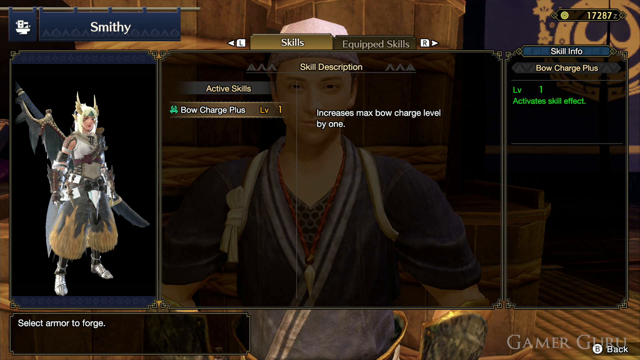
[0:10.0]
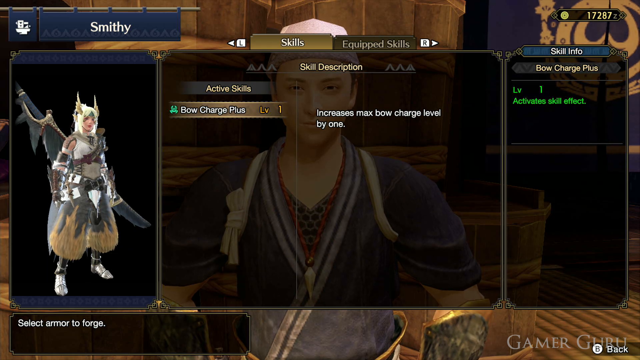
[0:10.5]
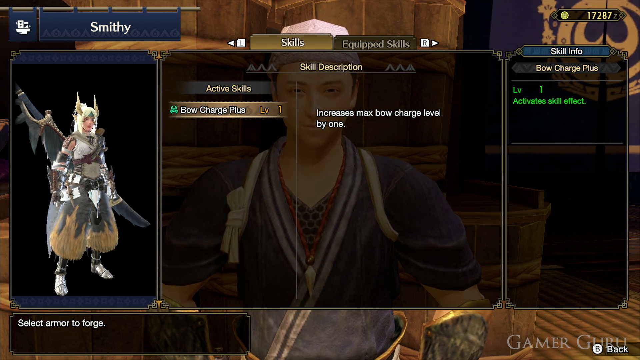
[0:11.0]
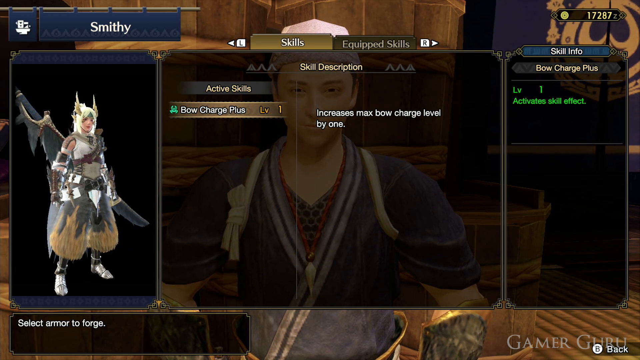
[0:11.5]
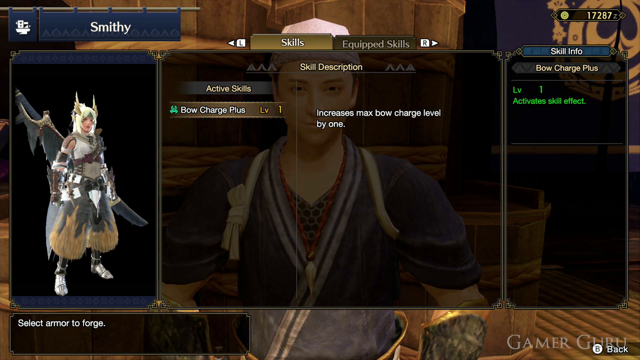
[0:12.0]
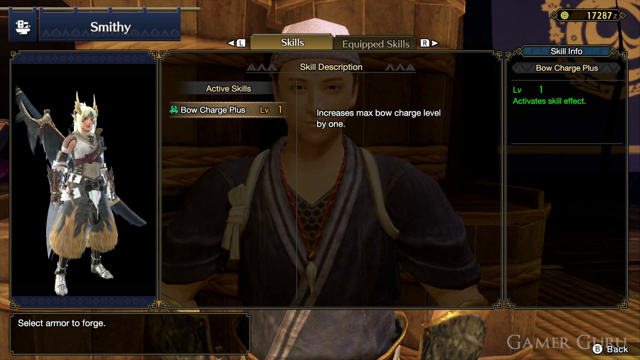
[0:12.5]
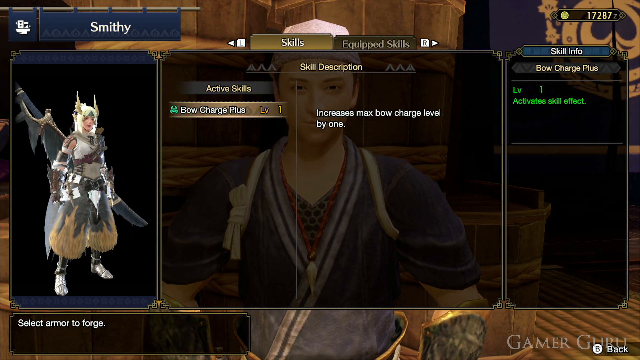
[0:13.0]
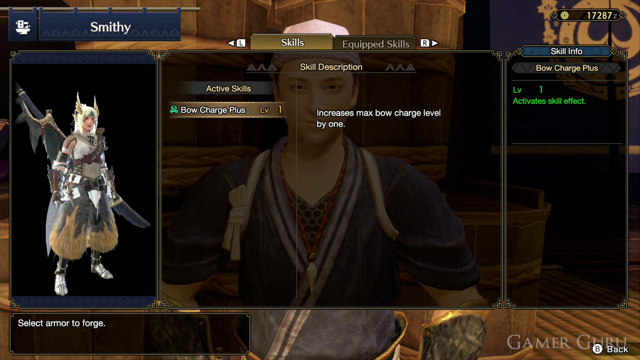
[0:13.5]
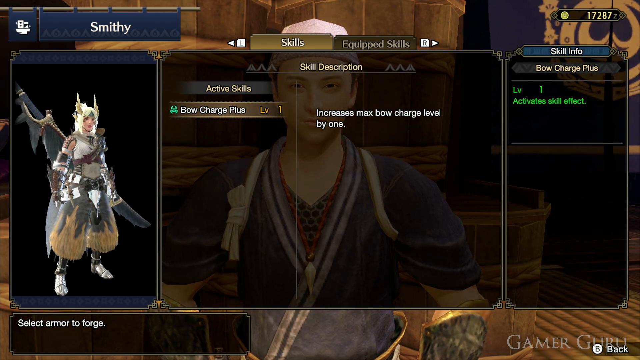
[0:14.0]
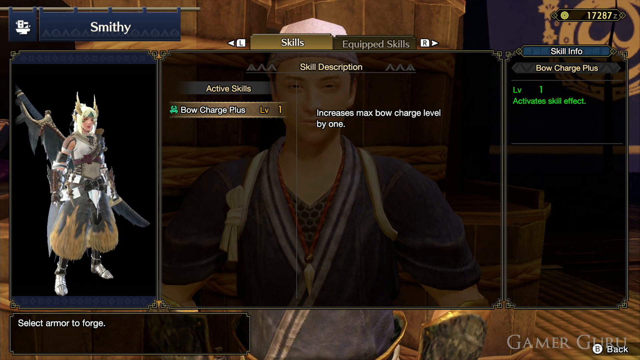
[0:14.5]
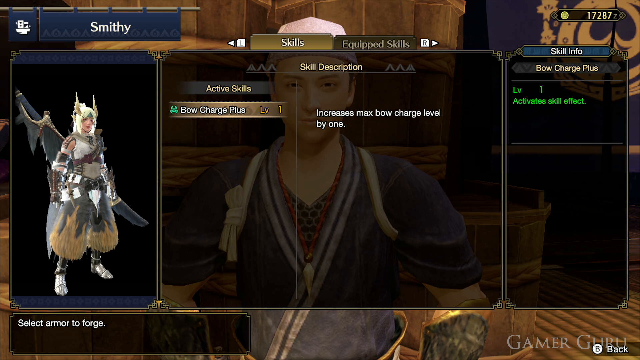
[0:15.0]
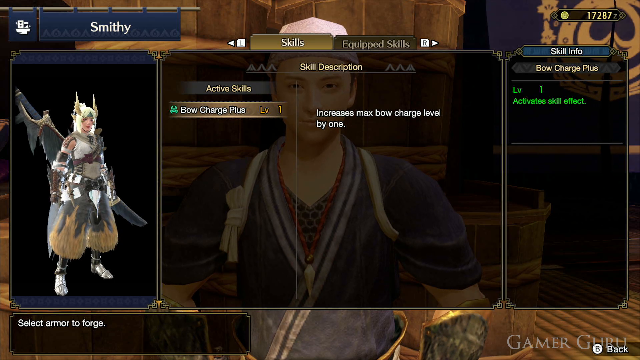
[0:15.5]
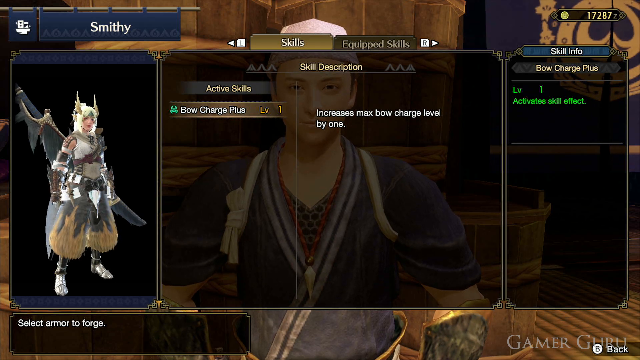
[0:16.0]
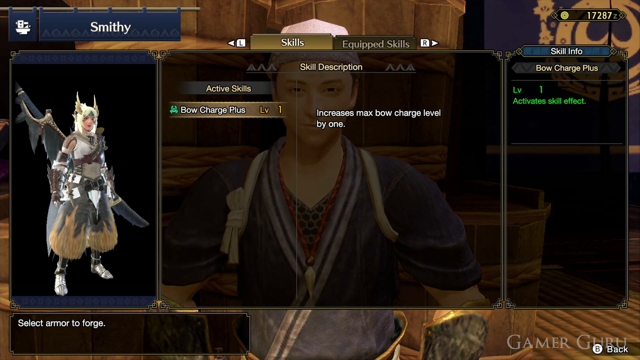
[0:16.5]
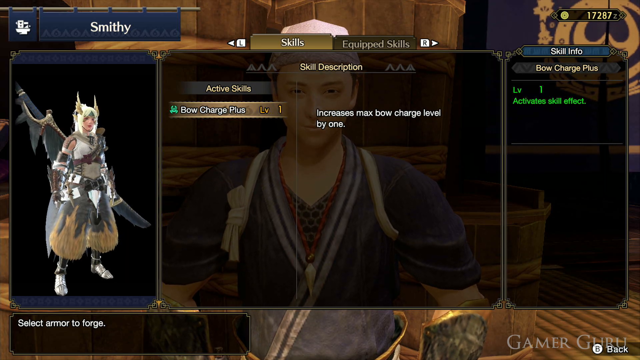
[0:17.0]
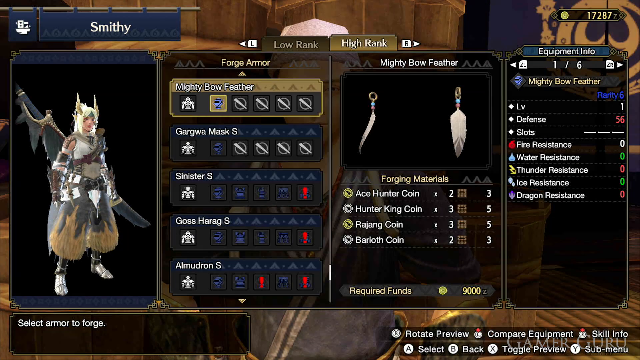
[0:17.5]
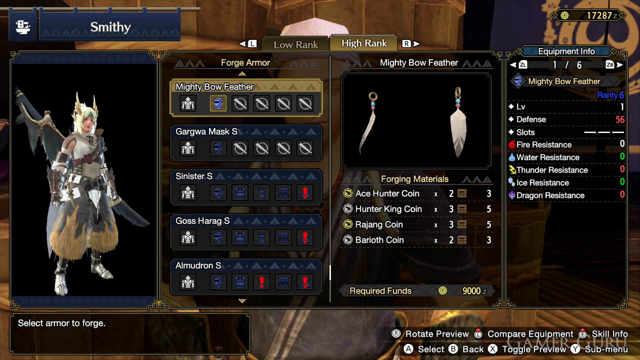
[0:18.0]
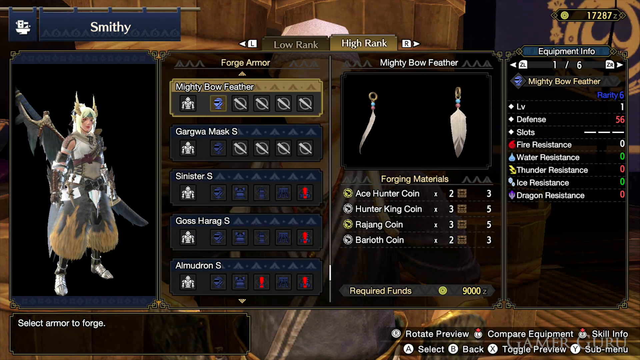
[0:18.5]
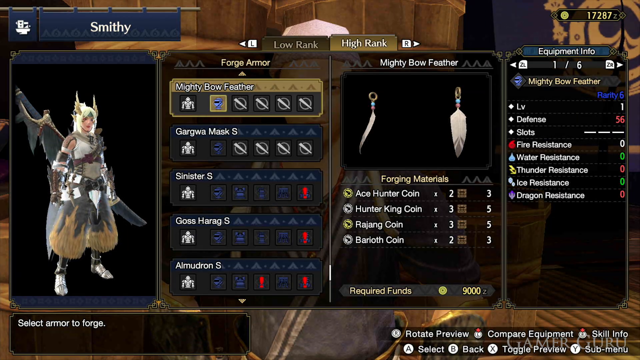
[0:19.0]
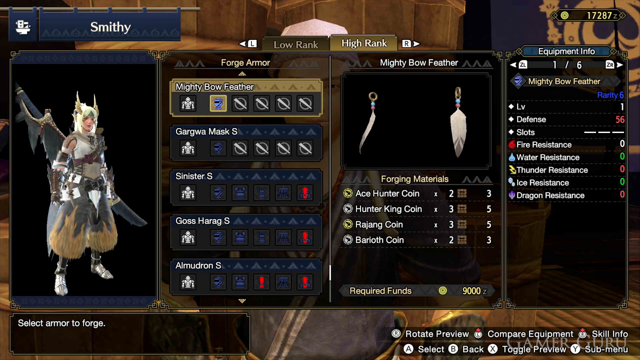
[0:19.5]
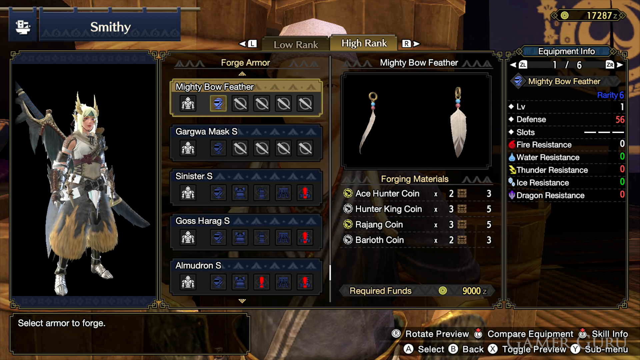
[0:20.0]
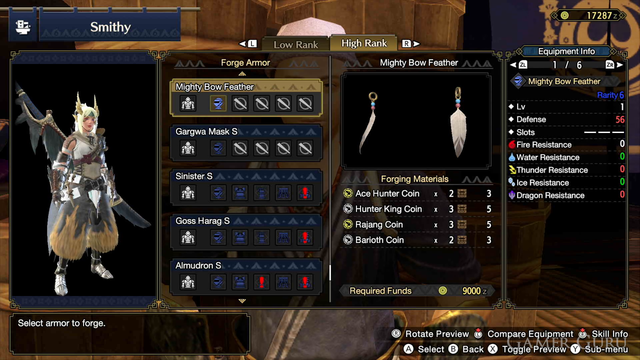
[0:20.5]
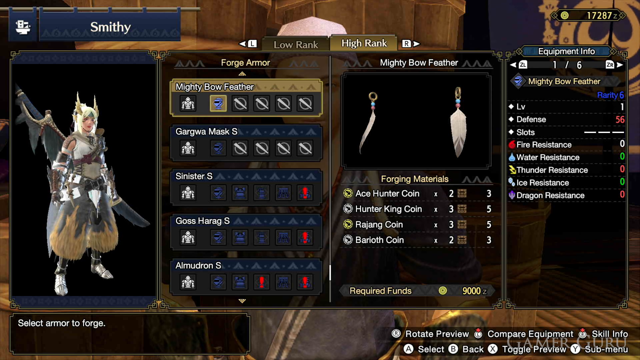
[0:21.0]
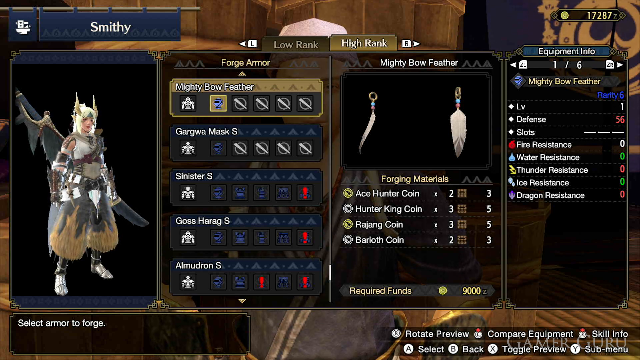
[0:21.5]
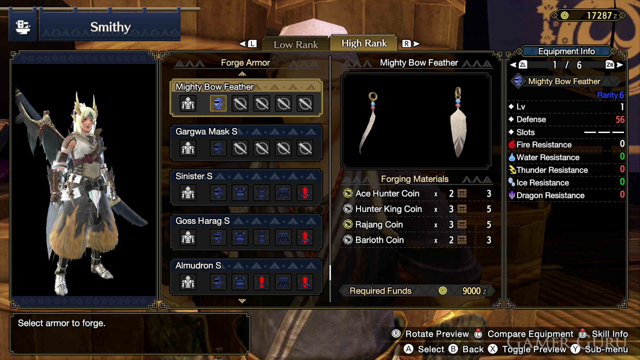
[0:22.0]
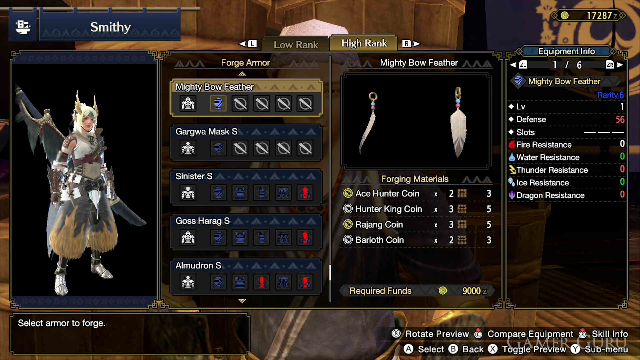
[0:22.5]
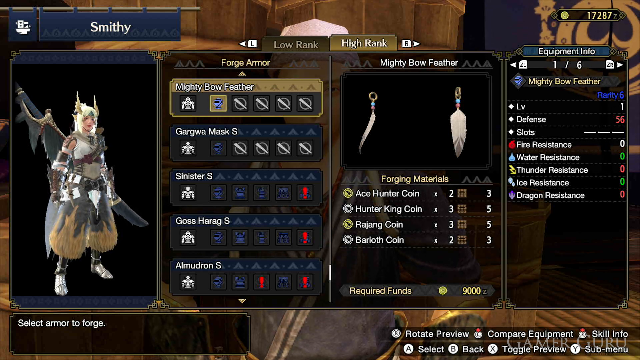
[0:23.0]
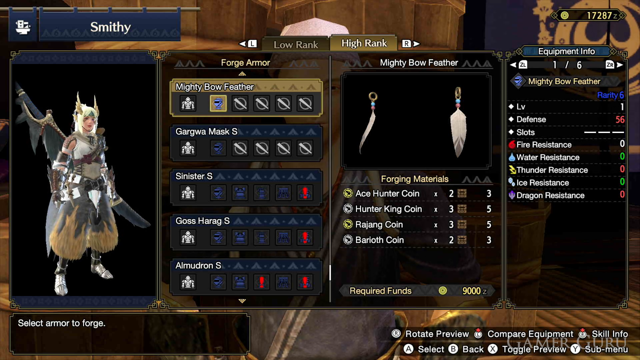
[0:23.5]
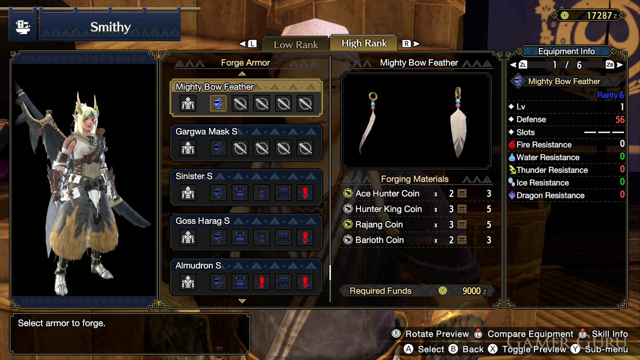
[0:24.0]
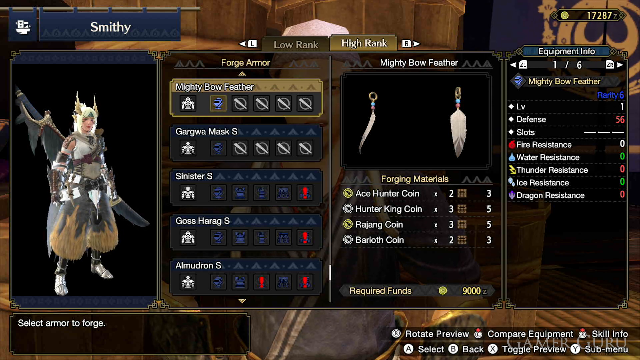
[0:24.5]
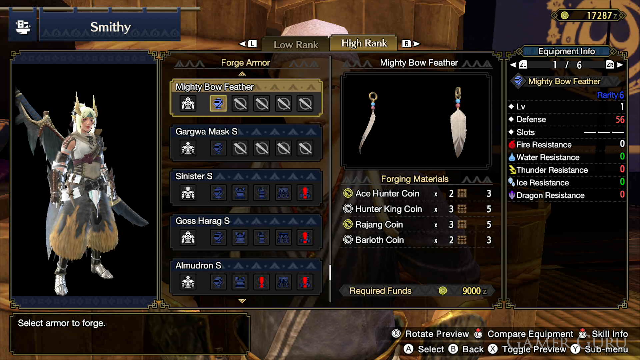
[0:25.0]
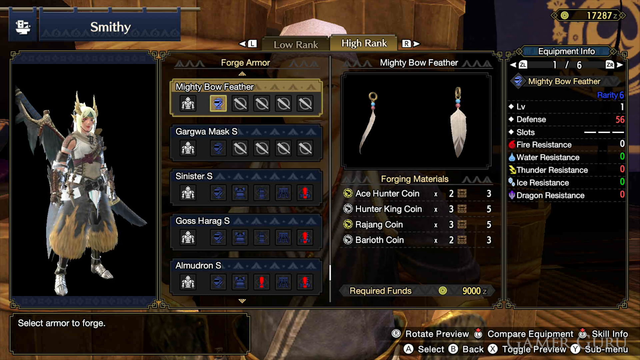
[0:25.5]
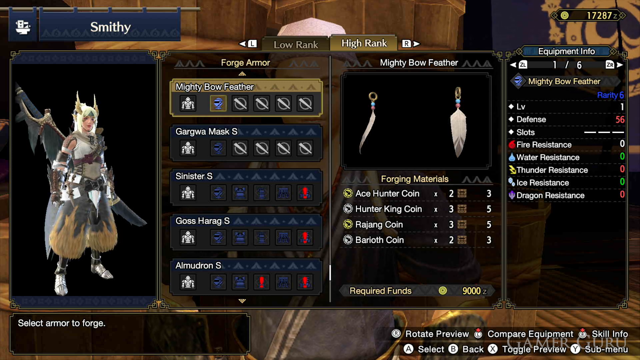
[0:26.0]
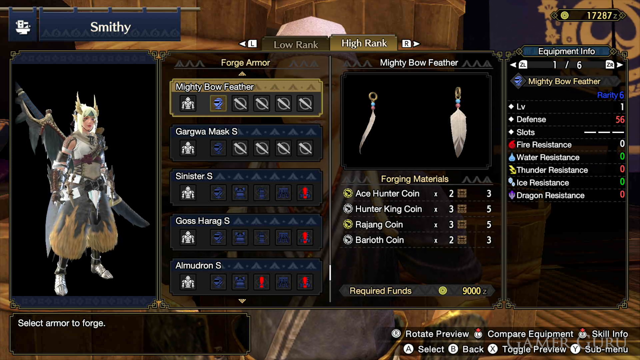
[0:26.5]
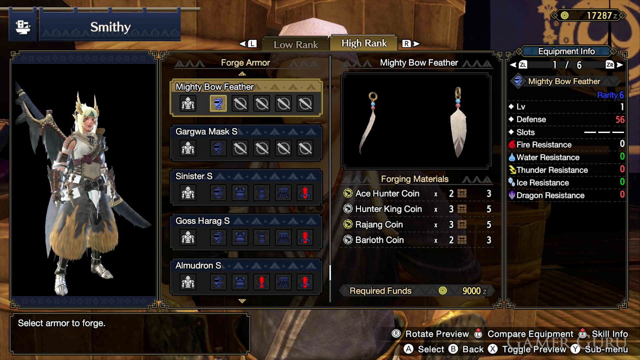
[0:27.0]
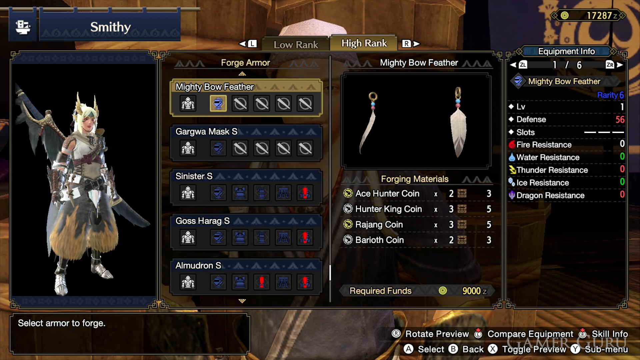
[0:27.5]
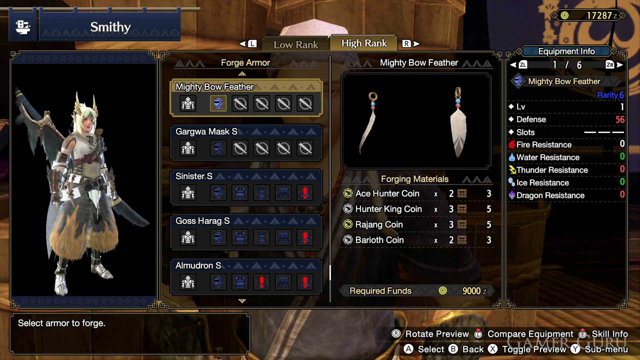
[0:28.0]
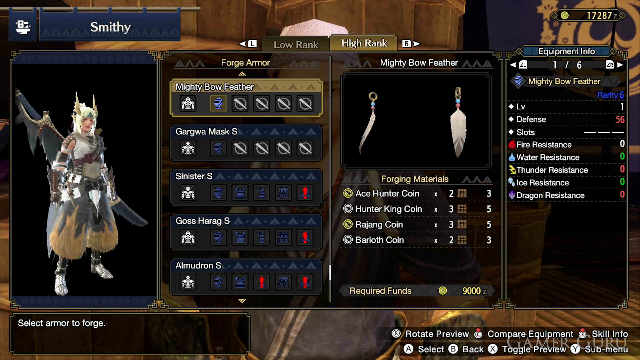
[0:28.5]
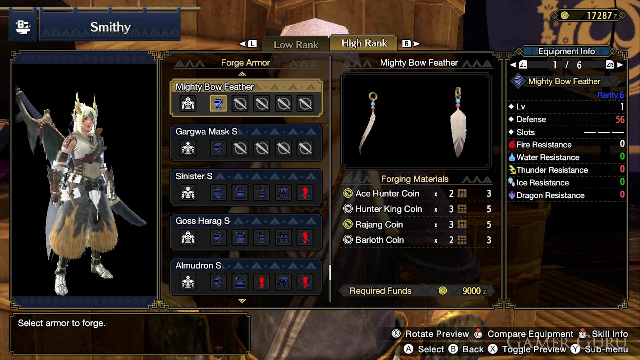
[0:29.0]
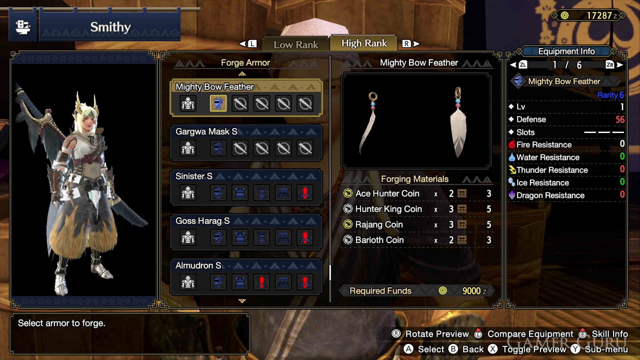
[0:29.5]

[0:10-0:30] A video game screen shows the character has 17,287 of some kind of currency. "Smithy" is at the top left, with a hammer-and-anvil icon for where the character currently is. The menu reads "active skills bow charge plus level one" and "increases the maximum charge level by one." A picture of the character on the left shows a big sword on their back and some kind of outfit or uniform. A picture of the Smithy is visible behind the transparent menu. The view switches to another screen reading "Forge Armor," listing Mighty Bowfeather, Gargoyle Mask S, Sinister S, Goss Haragas and Almudron S. It also reads "Forging Materials": Ace Hunter Coin 2, Hunter King Coin 3, Red Jane Coin 3, Barloff Coin 2.